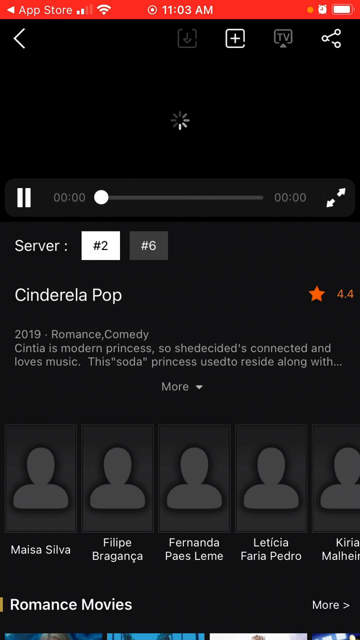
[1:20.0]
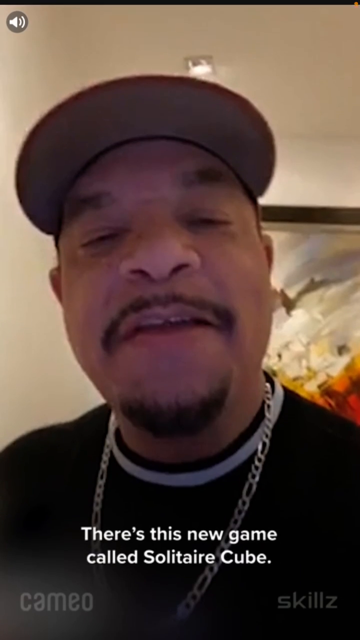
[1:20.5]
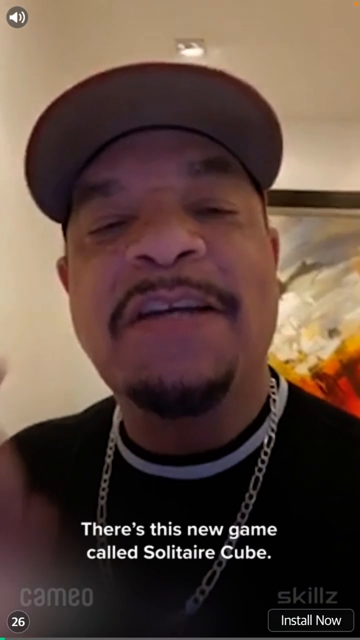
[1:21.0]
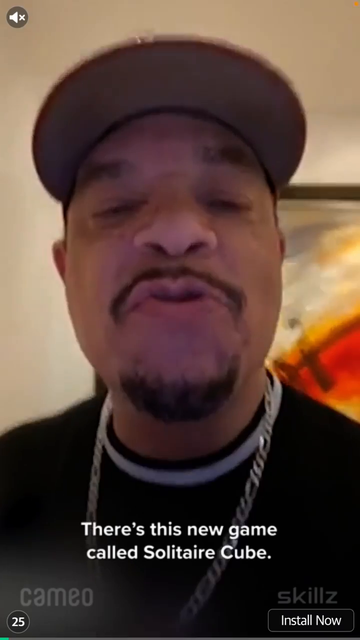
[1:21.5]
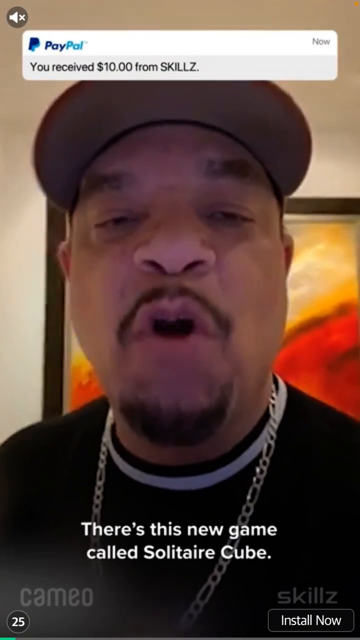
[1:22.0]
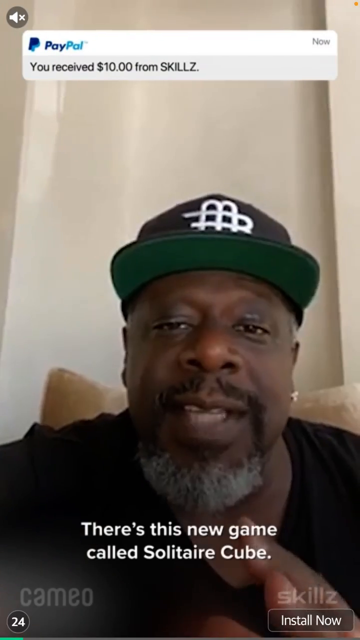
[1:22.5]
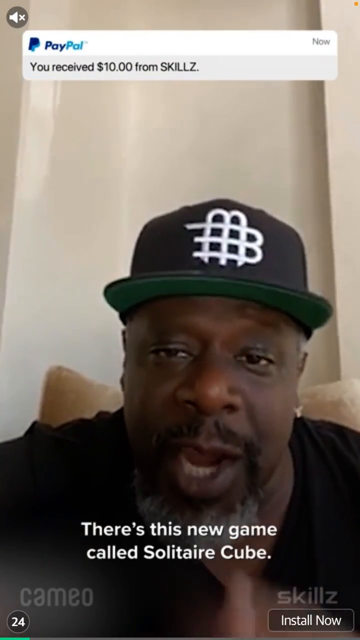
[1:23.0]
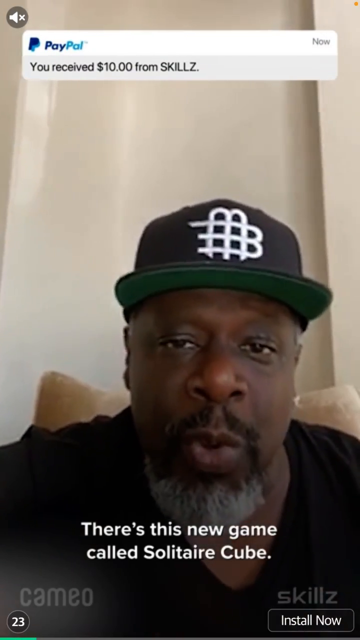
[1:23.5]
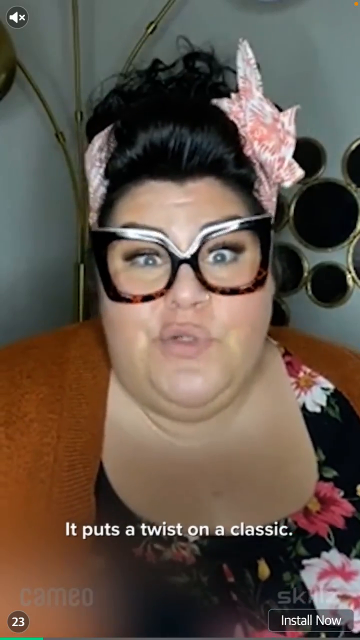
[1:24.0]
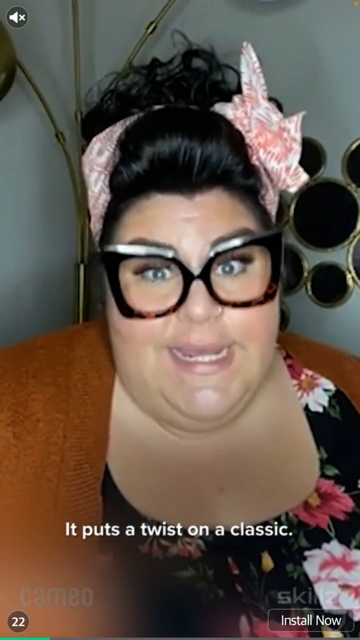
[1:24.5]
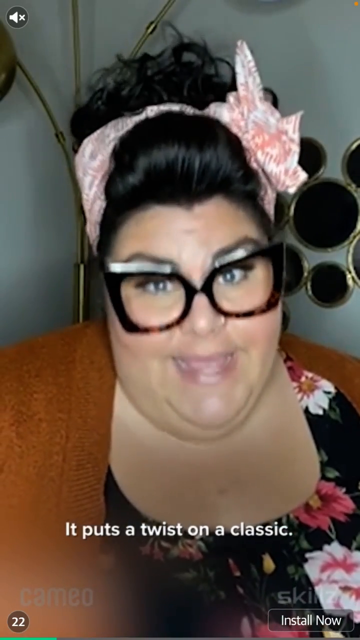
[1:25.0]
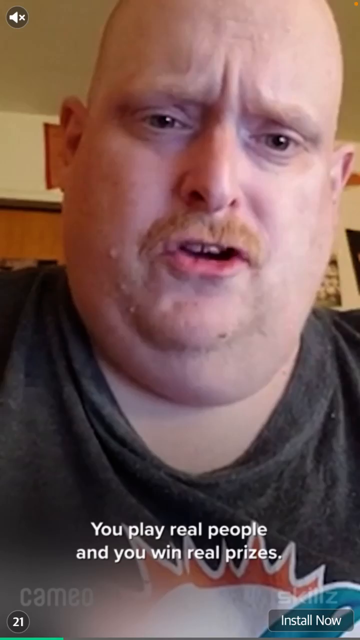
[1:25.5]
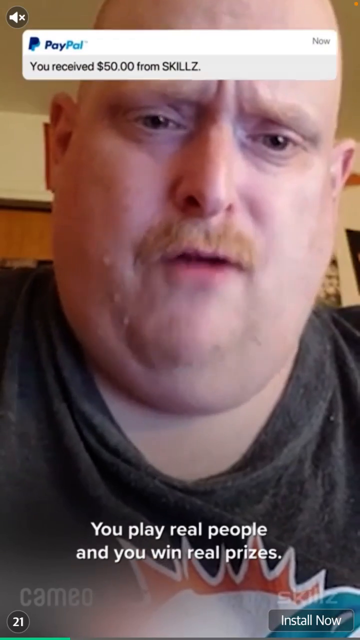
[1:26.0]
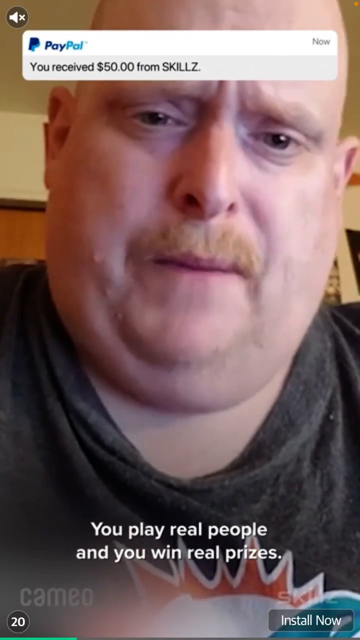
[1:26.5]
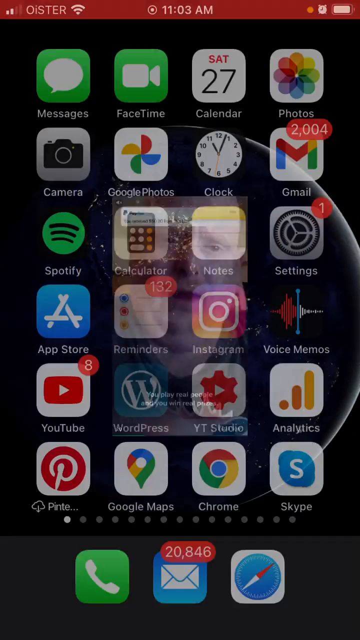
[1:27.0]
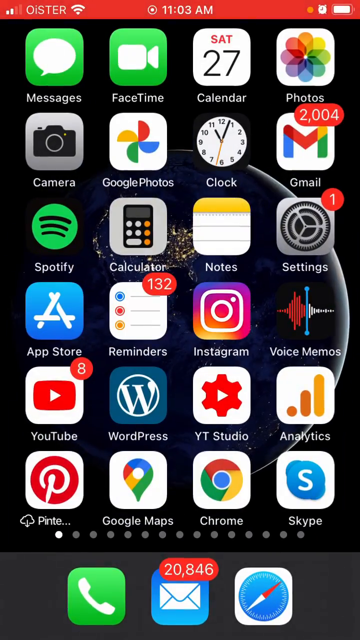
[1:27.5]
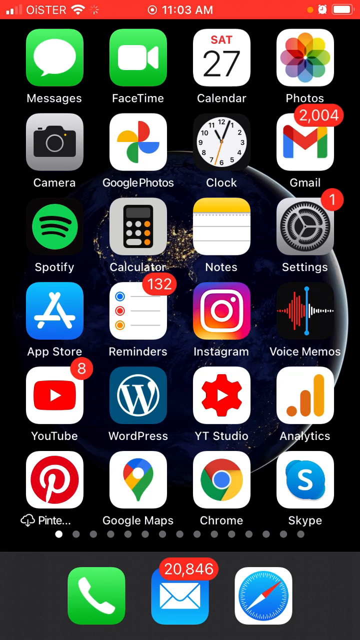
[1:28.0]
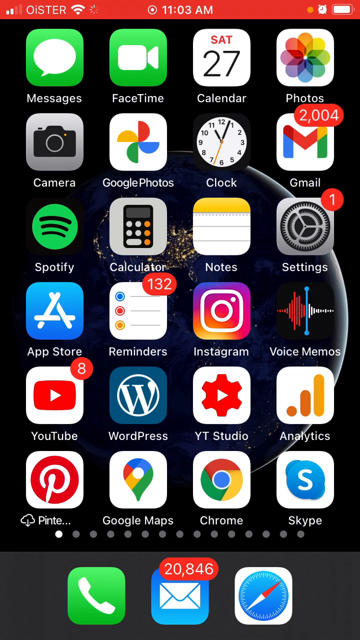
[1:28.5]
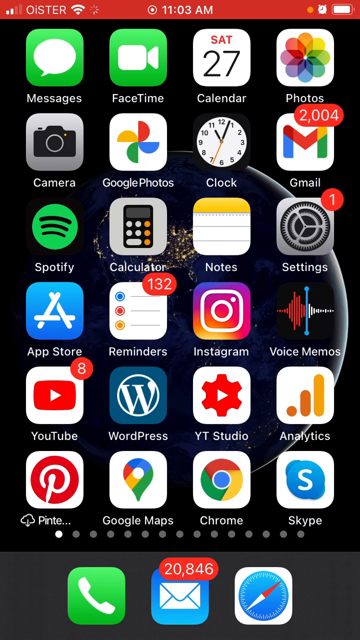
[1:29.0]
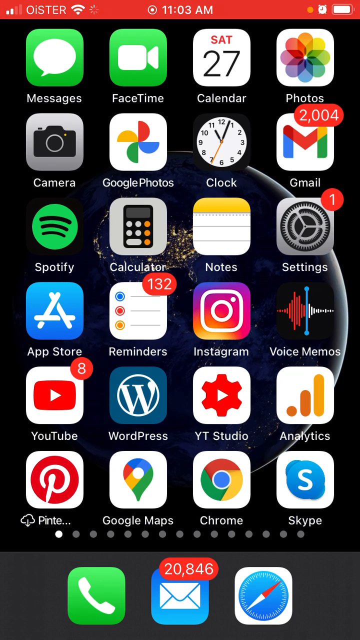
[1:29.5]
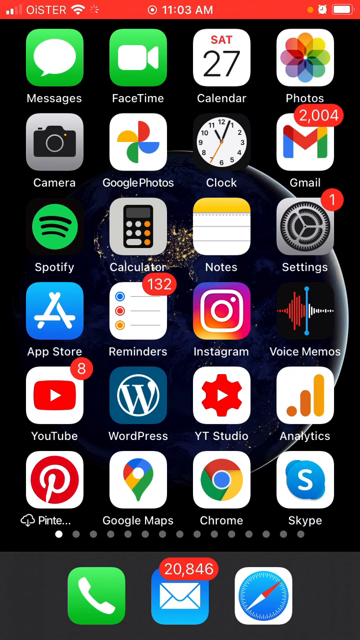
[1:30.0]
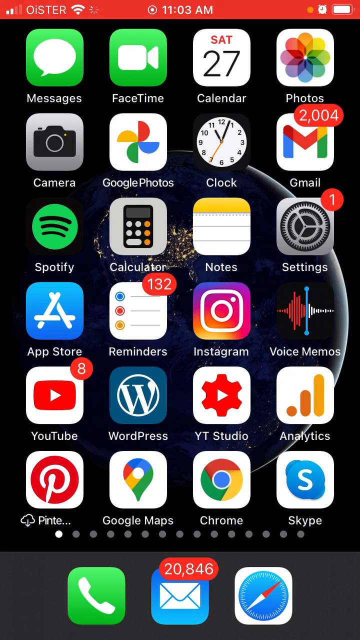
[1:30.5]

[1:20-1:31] A phone screen recording shows a bright red bar across the top reading "App Store," the time 11.03am, and a nearly full battery. A mostly black page shows a loading screen, and it looks like a video or movie is about to play. The screen indicates that server number 2 has been chosen. The title is "Cinderella Pop," listed as a 2019 romance comedy. Icons at the bottom show the actors or actresses. An ad pops up showing a man in a black shirt and a cap, apparently a video from Cameo. The ad says there is a new game called Solitaire Cube, and a couple of other people appear, possibly celebrities, influencers, or regular people. The phone's home screen then appears, showing several icons and apps.